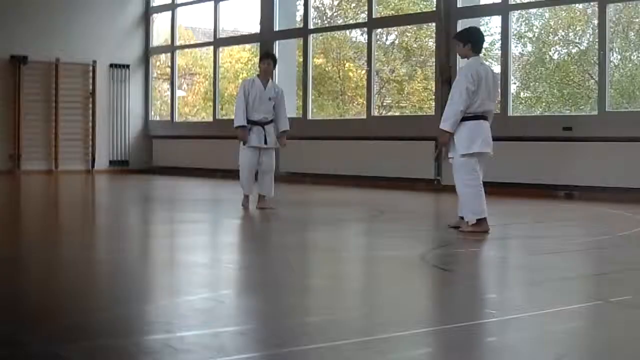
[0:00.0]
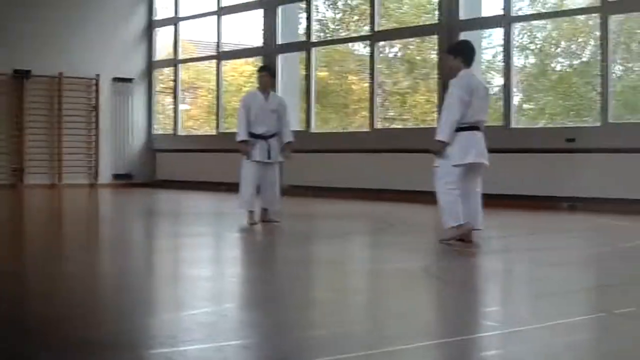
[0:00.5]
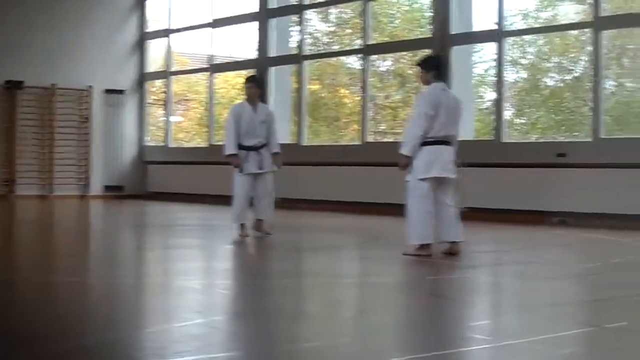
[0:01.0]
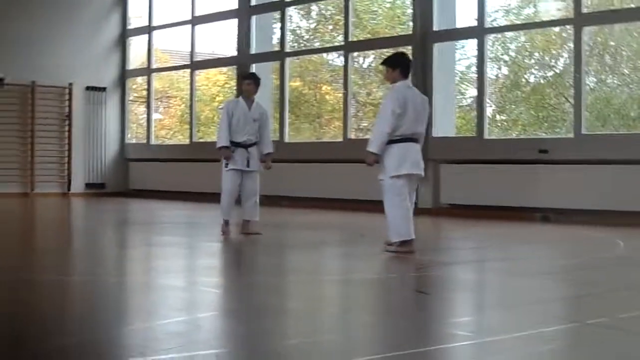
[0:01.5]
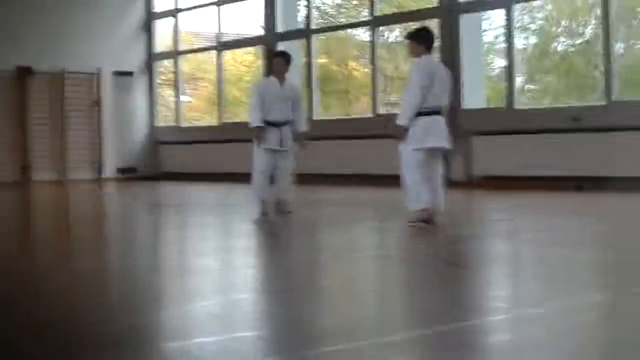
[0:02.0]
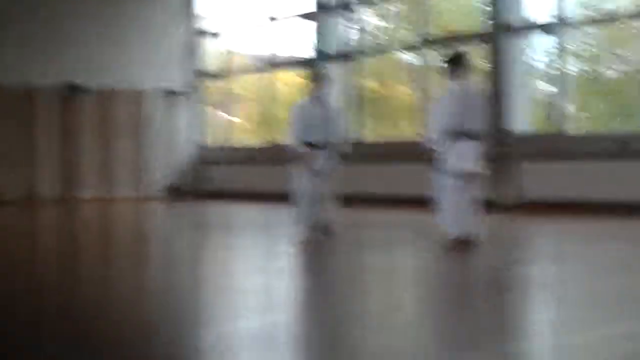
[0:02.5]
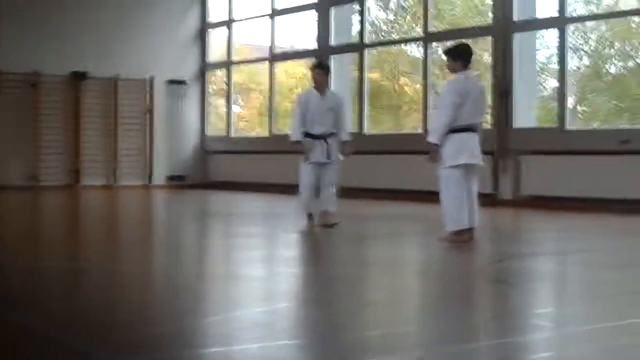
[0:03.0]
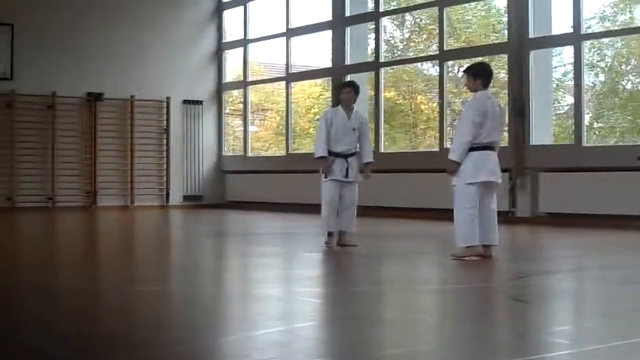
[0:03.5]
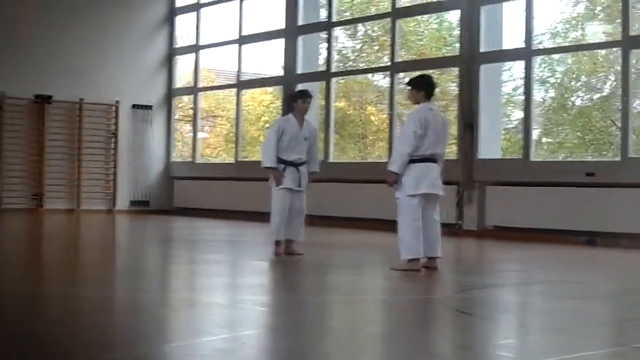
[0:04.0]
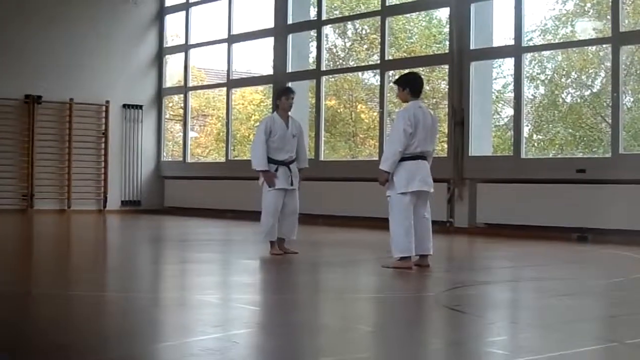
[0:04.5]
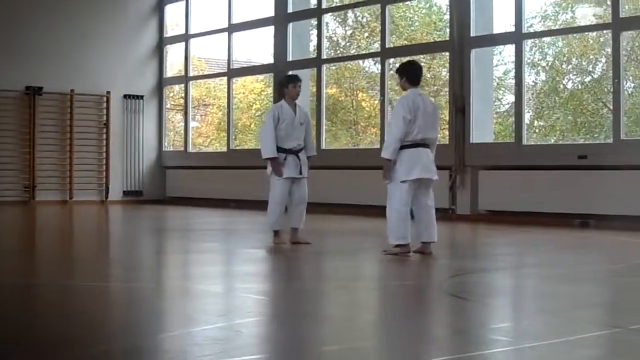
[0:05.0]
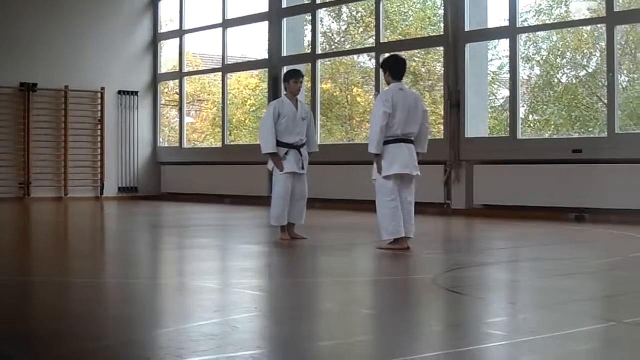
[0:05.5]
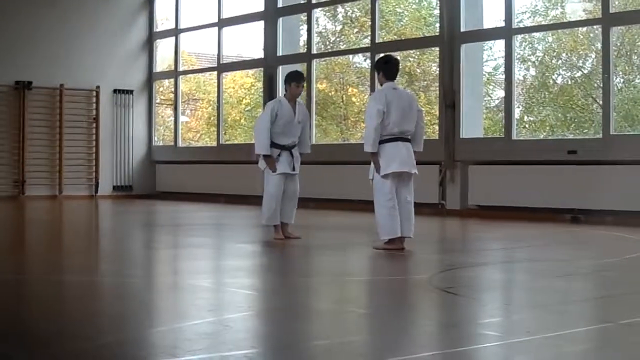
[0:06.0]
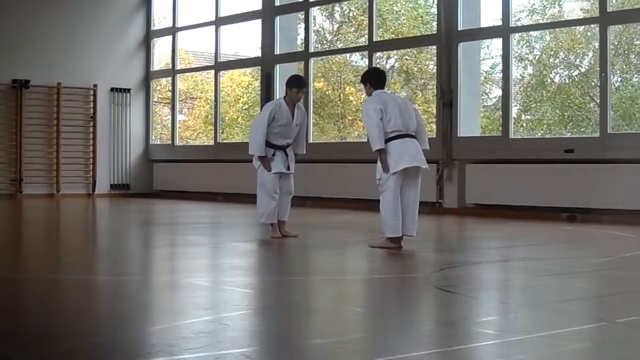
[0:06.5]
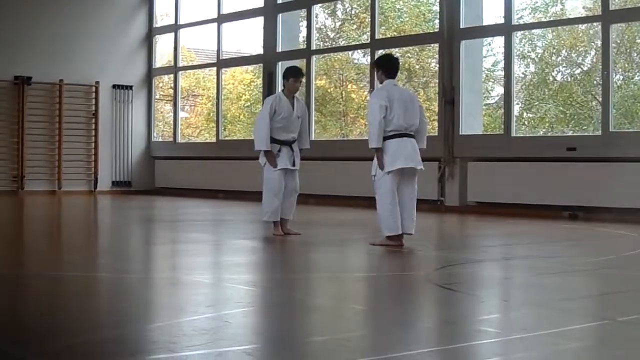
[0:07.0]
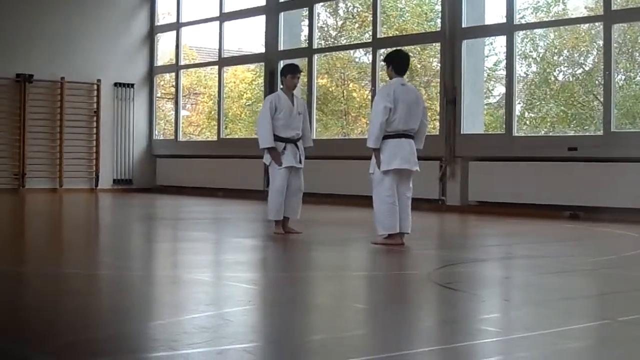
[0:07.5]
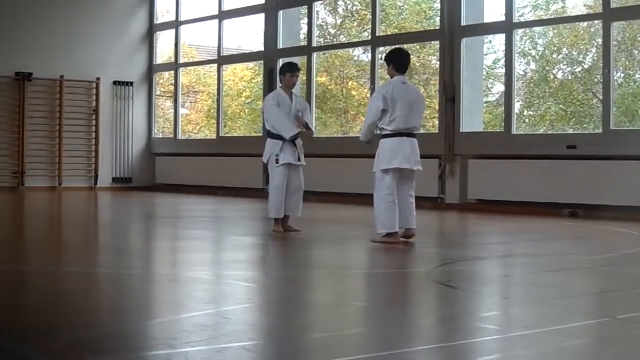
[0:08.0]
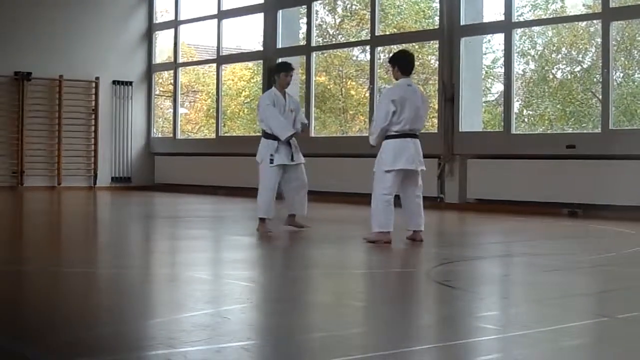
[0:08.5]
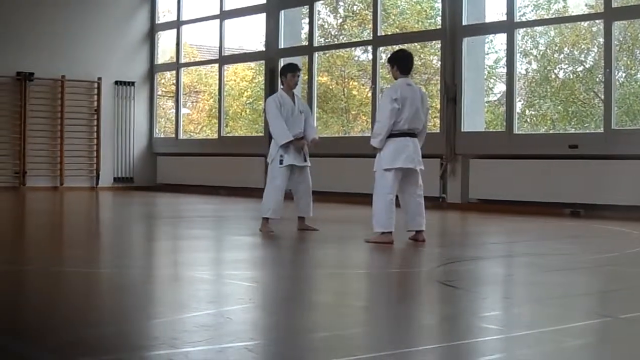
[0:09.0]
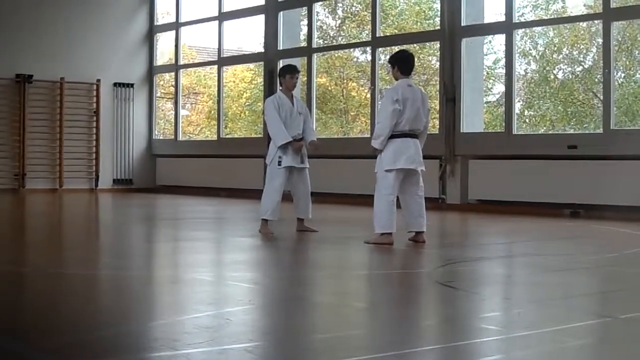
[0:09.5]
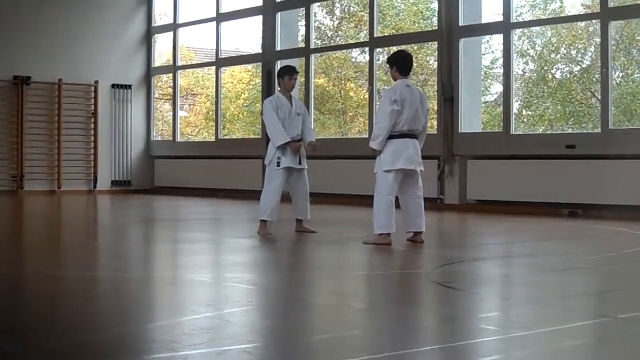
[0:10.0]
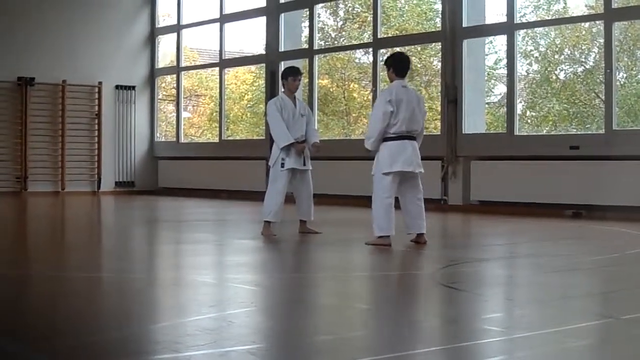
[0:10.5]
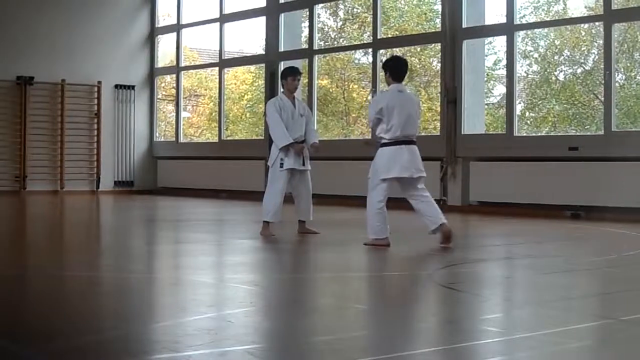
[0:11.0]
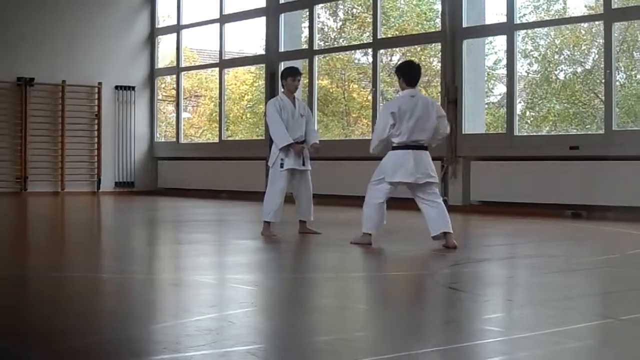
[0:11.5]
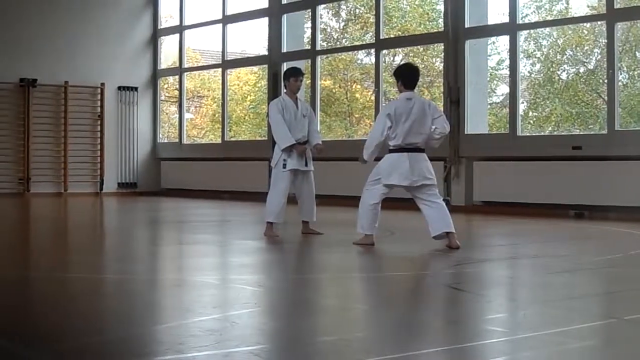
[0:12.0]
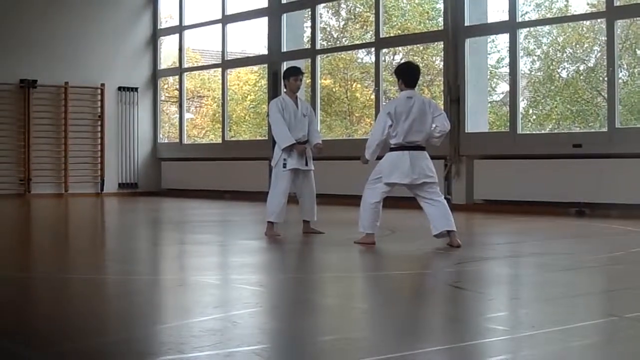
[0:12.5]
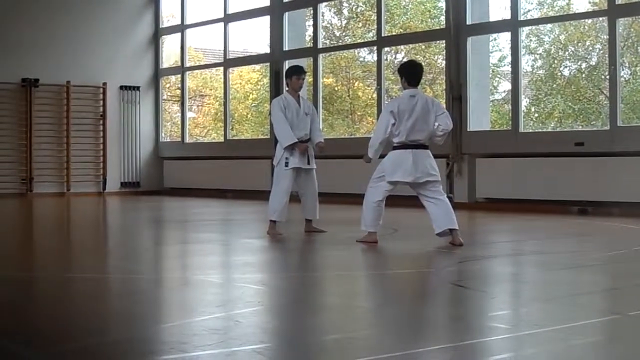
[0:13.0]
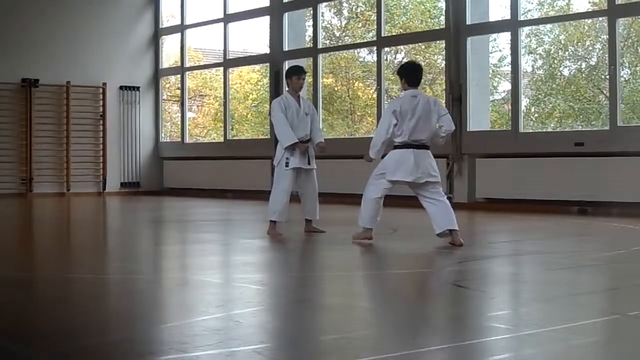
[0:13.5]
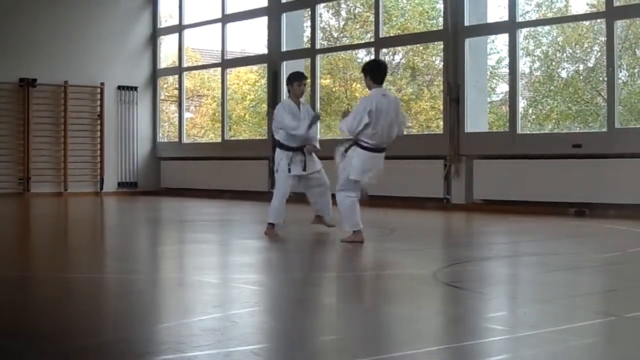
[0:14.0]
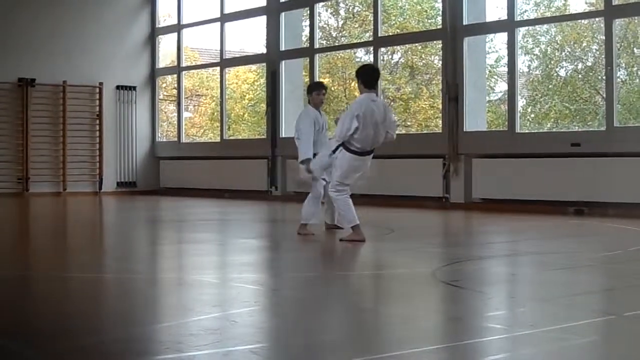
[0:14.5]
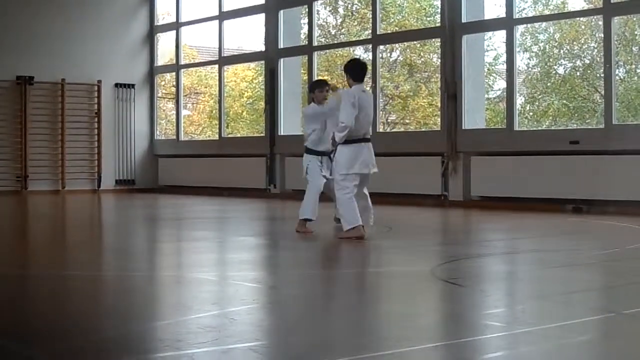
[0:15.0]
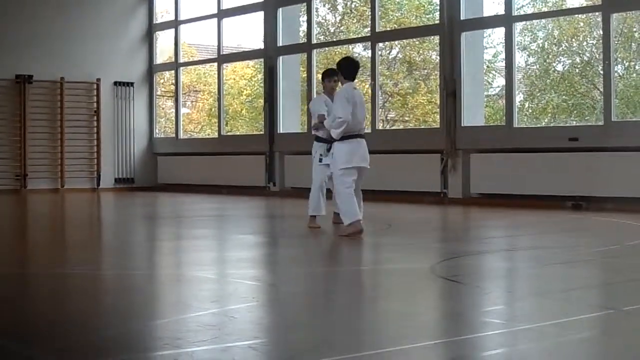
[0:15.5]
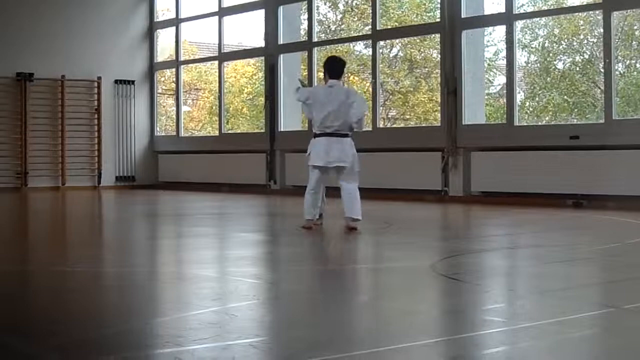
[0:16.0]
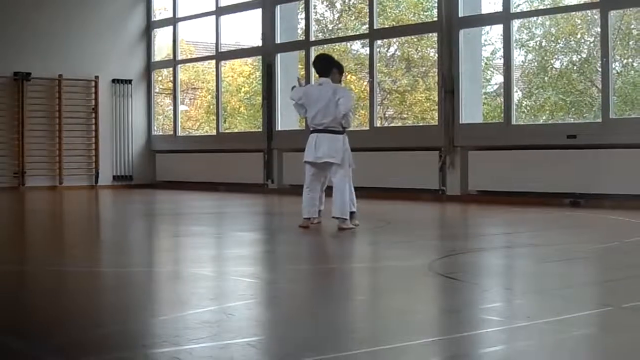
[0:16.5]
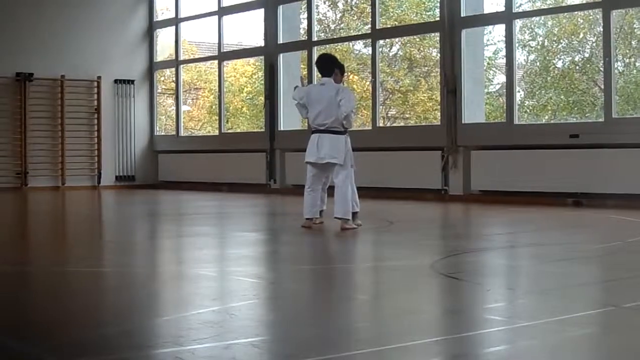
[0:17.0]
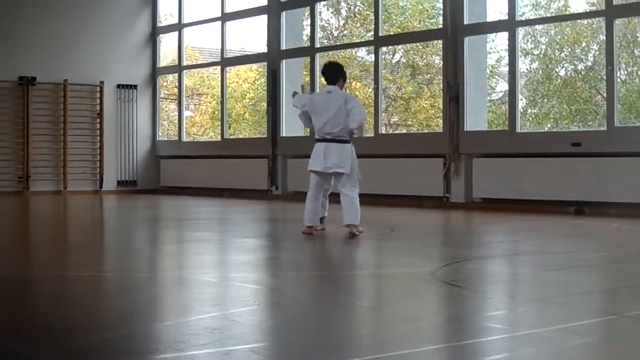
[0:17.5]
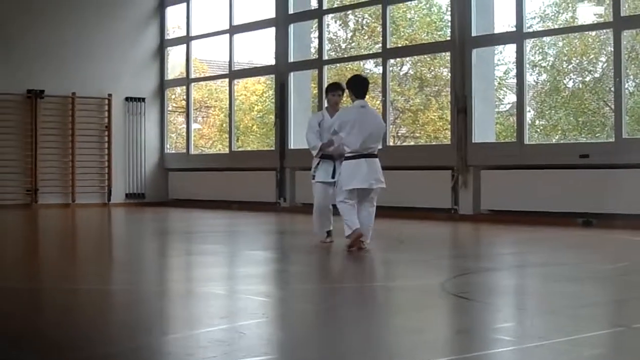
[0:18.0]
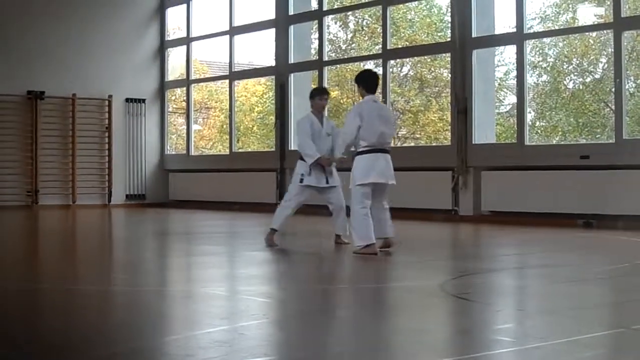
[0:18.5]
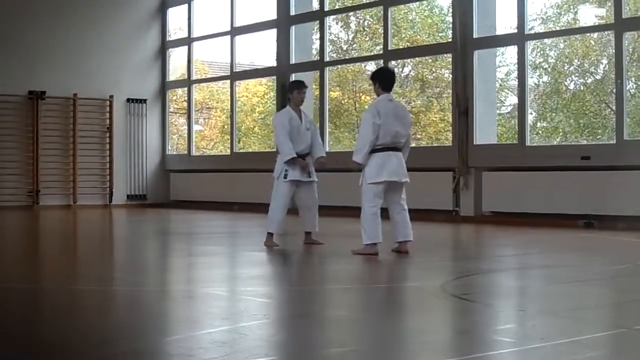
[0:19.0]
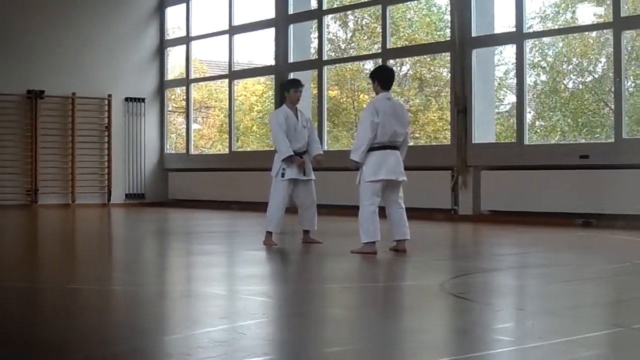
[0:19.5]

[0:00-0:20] Inside a building are two boys, one on the right and one on the left. They appear to be wearing white clothing that is sort of dojo-like or karate-like, both appear to have black belts, and they appear to be of Asian descent. There are large windows to their right with trees outside. The flooring appears to be wooden, and the boys are not wearing shoes. The boys look to the left, away from the camera, and then look toward each other. They bow and then get into their positions, apparently and possibly for a fight. Looking toward each other, the boy on the right slowly lifts his leg toward the boy on the left, while the boy on the left sort of shows how to block that attack. They continue with slow hand and leg movements, appearing to show how to do certain movements. Also inside the building, at the very top middle left, there are large sort of racks on the wall; they are brownish and look to be made of wood as well.